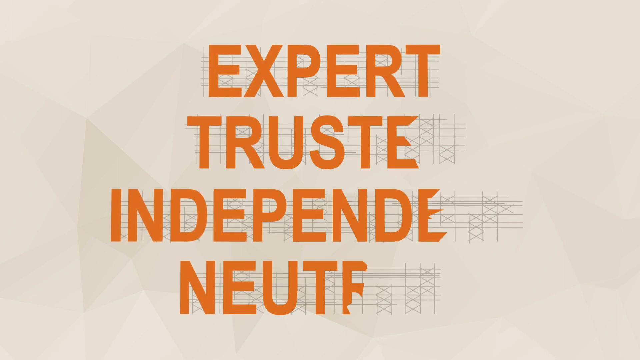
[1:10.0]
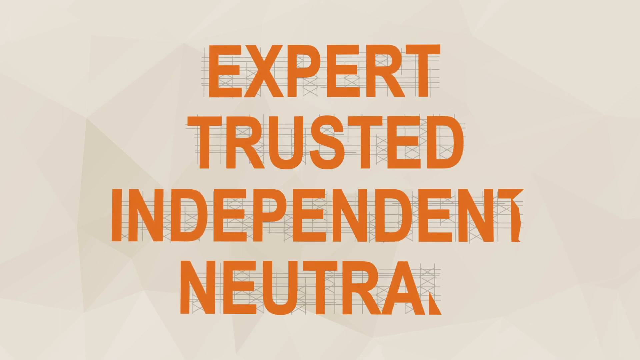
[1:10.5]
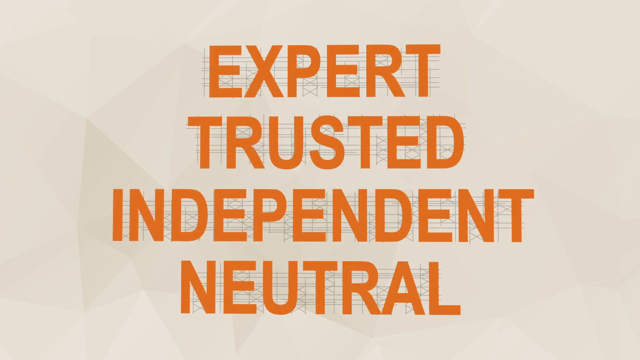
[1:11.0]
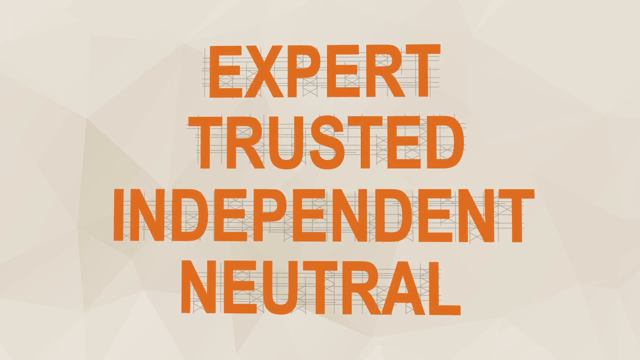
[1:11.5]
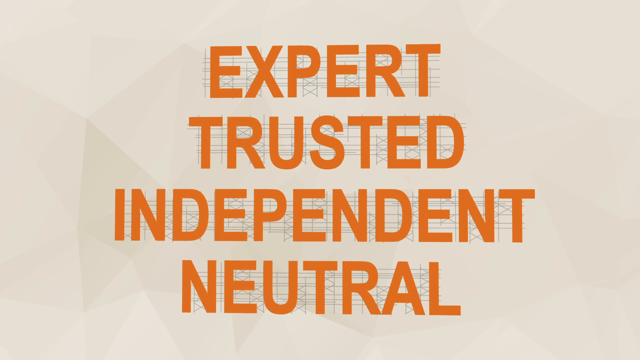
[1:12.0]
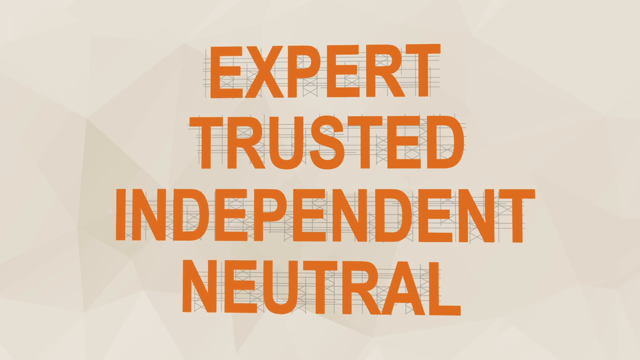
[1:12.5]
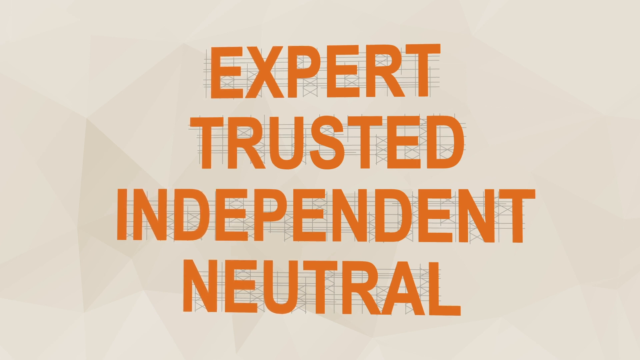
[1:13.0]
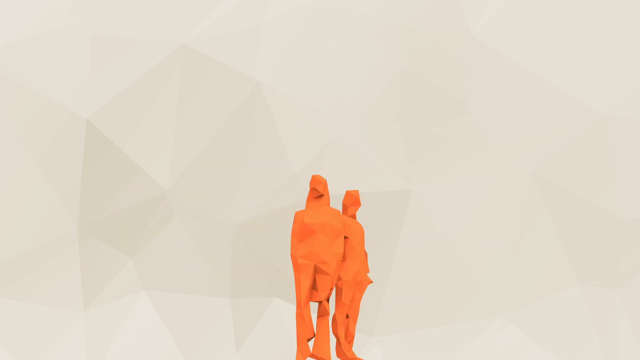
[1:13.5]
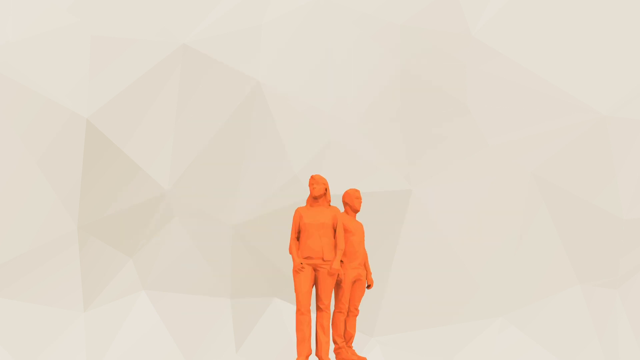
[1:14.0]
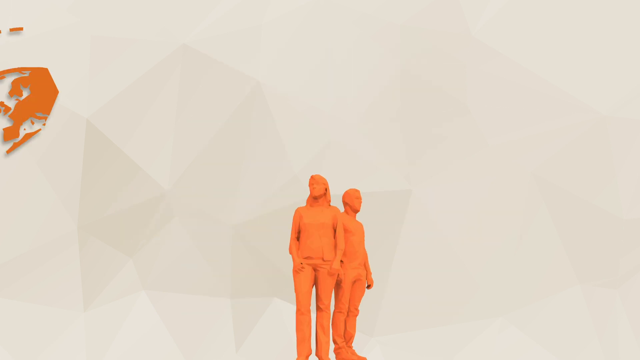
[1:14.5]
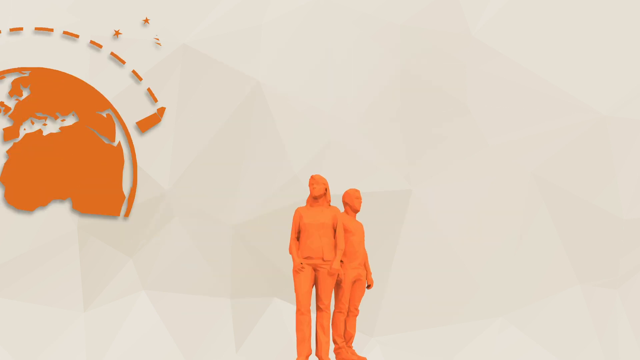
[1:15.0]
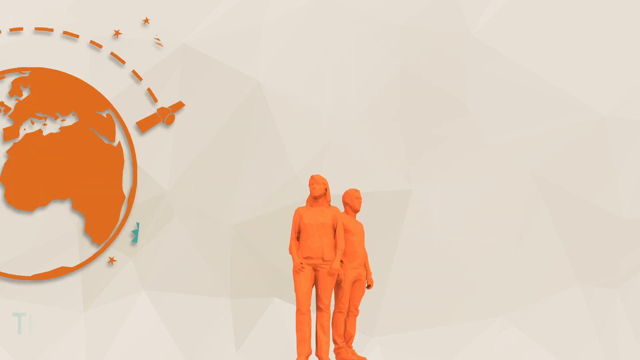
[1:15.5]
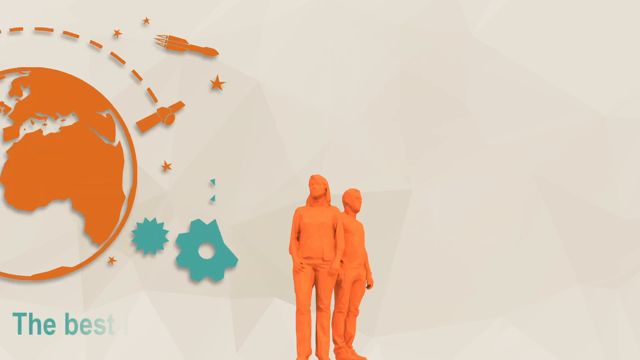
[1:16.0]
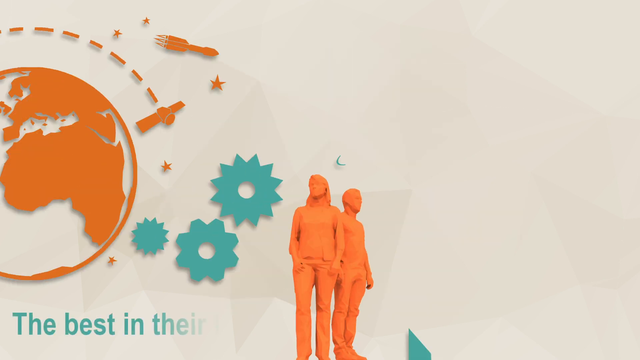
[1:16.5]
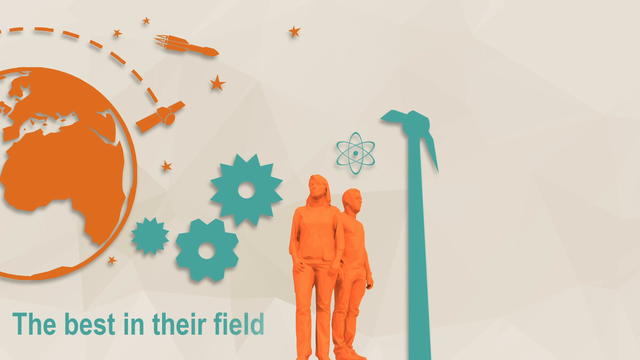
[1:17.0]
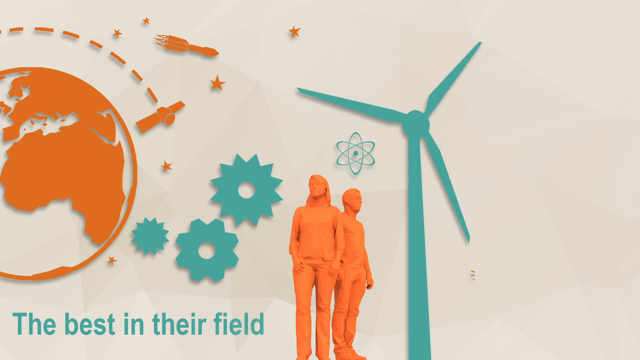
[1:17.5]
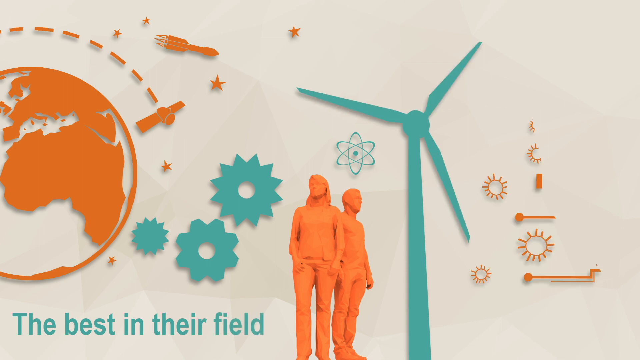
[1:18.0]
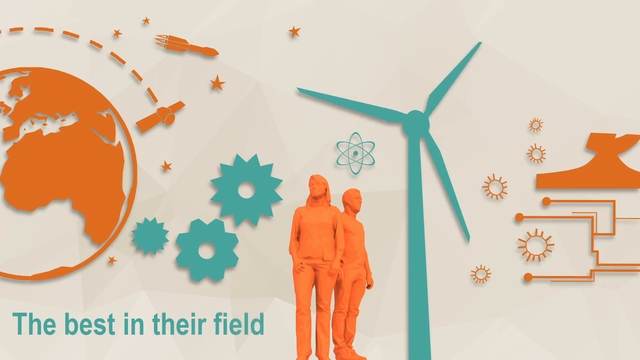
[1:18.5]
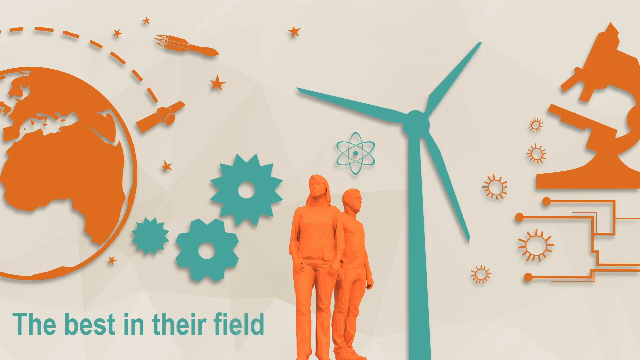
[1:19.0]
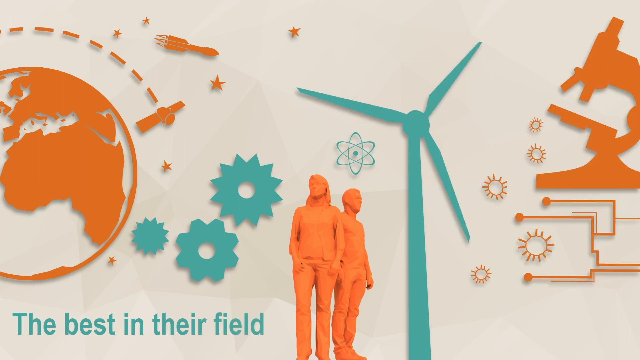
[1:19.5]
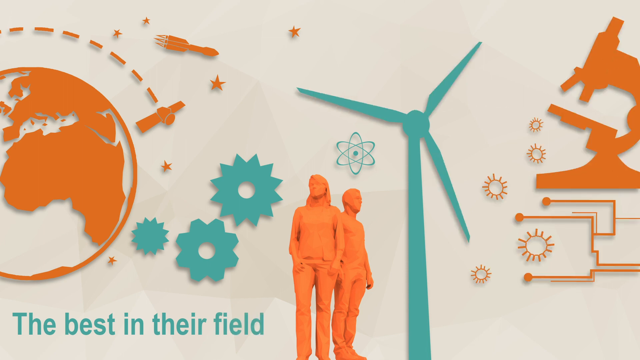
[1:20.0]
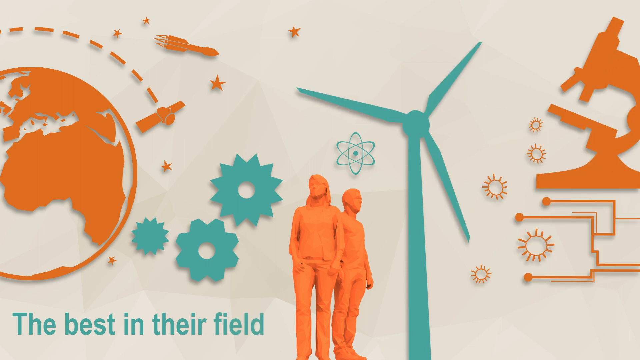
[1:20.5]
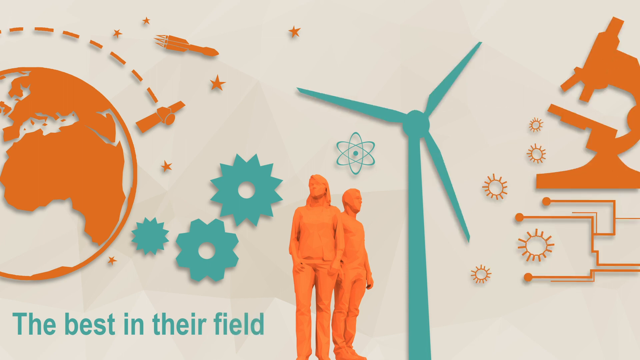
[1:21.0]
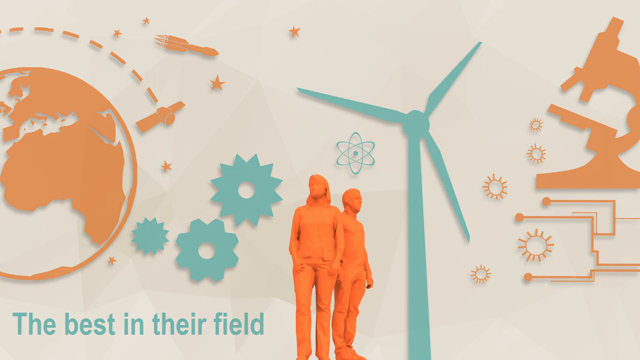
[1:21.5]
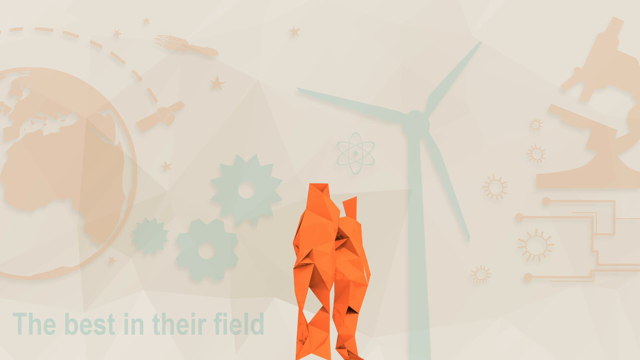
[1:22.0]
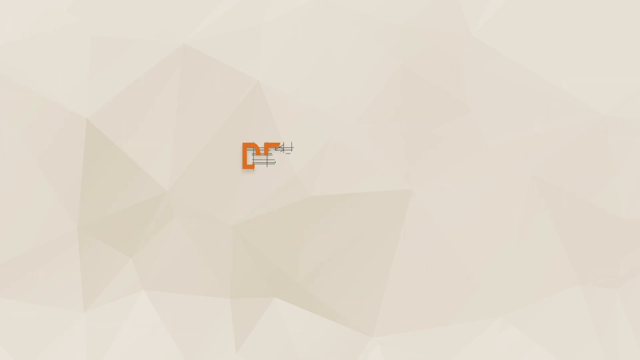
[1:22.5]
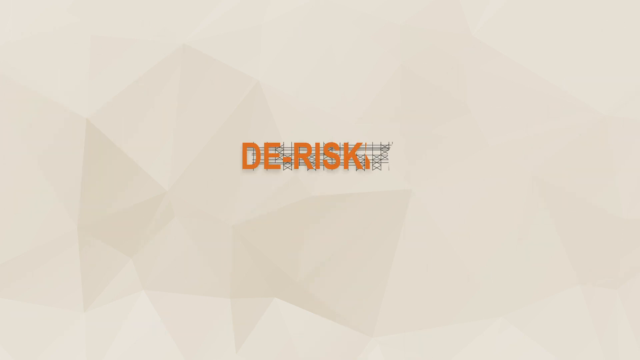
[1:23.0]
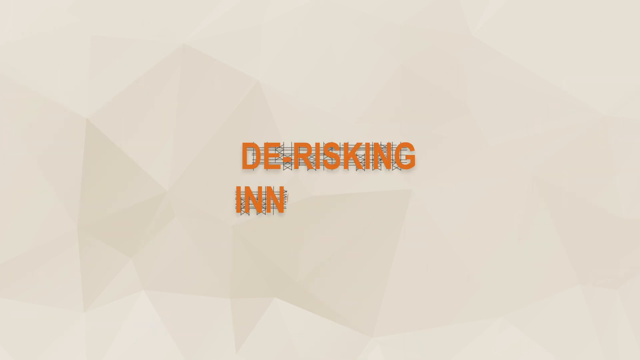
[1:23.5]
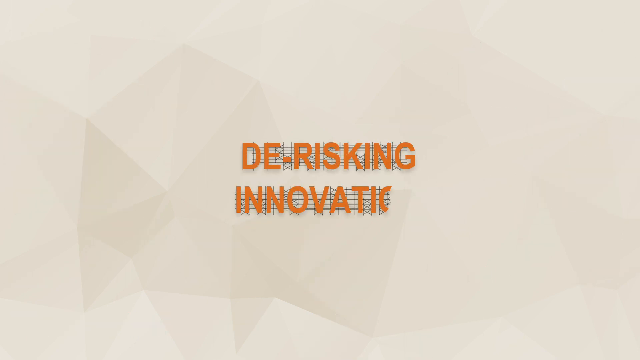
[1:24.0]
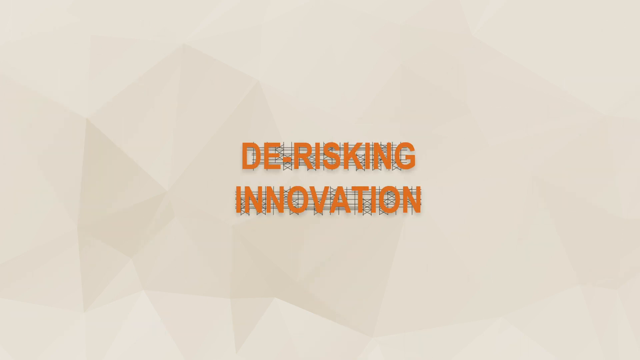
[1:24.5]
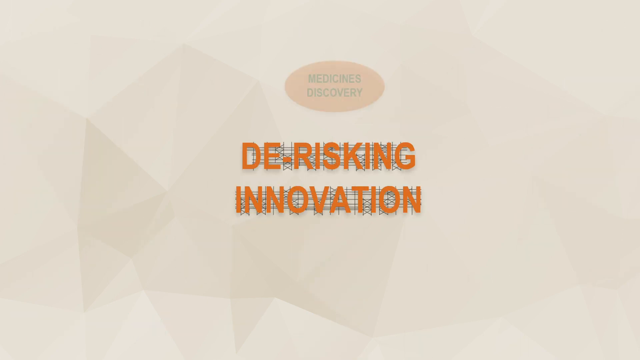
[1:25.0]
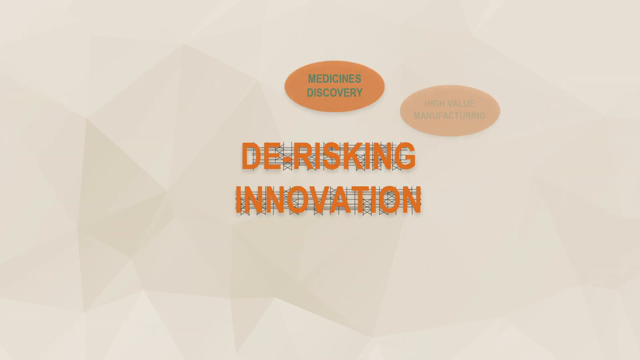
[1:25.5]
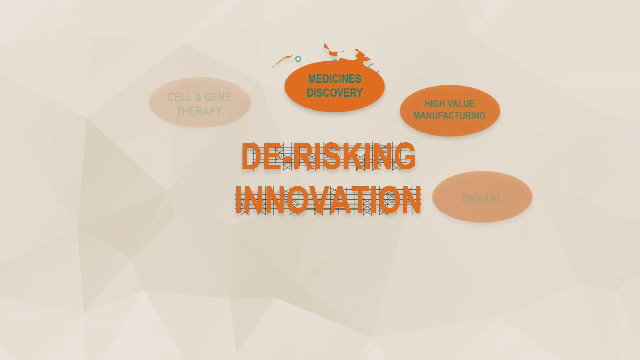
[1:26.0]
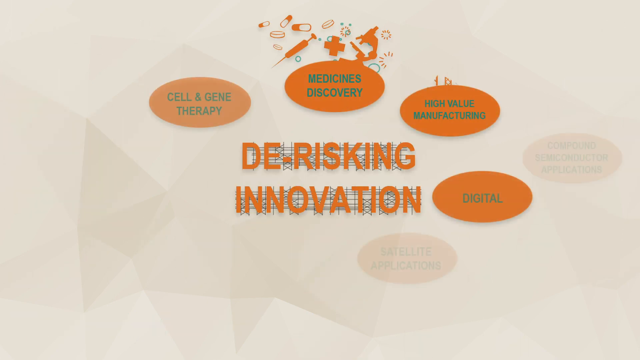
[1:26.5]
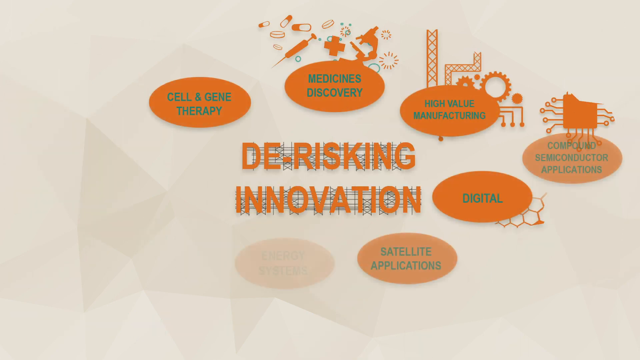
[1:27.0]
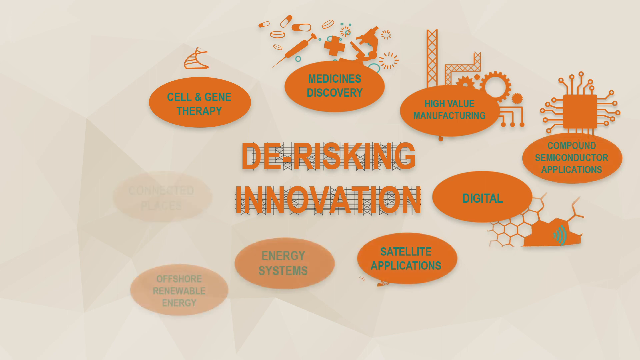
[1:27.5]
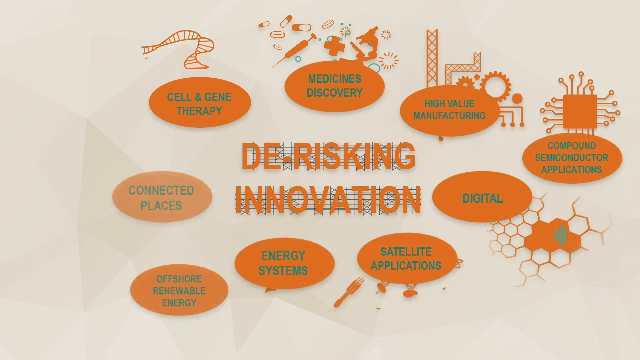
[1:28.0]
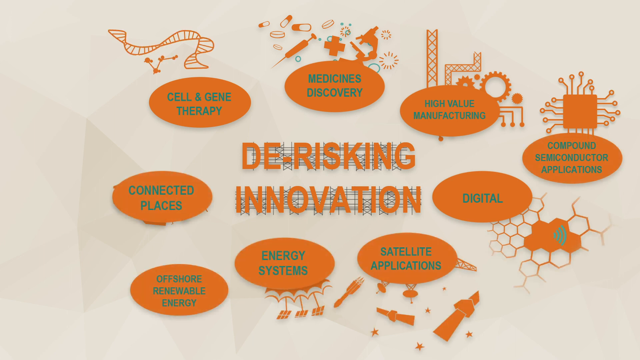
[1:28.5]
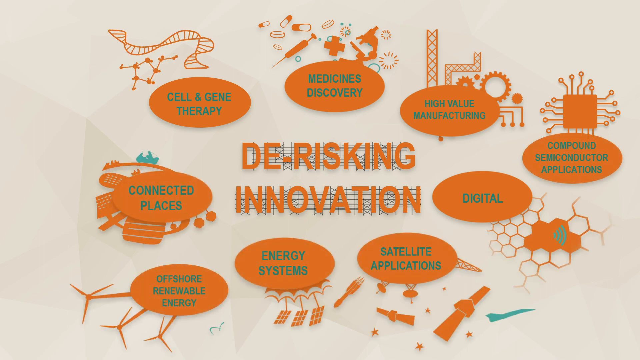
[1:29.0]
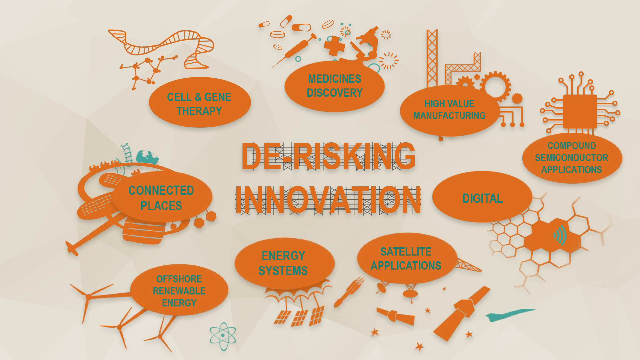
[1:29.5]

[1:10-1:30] Pictures of technology appear, along with individuals de-risking innovation. Orange infographics and animations show connections with medicine, energy, technology, academics, government and industry, and connections highlighting the expertise and independence of the organisation. Further connections are shown with digital, satellite applications, high-value manufacturing, compound semiconductor applications, energy systems, connected places, offshore renewable energy, and cell and gene therapy.